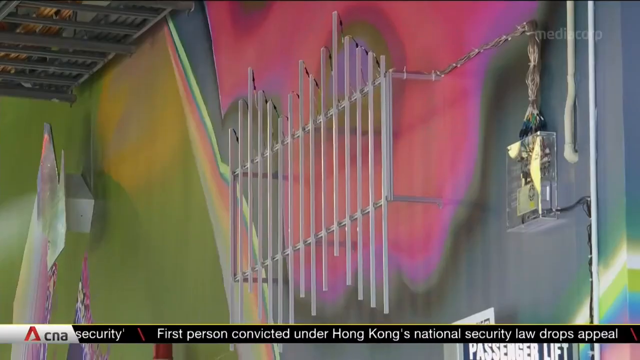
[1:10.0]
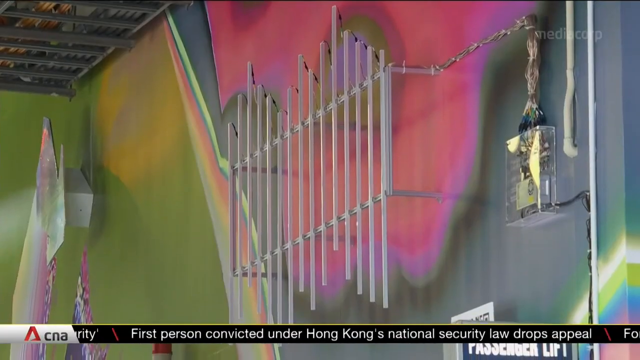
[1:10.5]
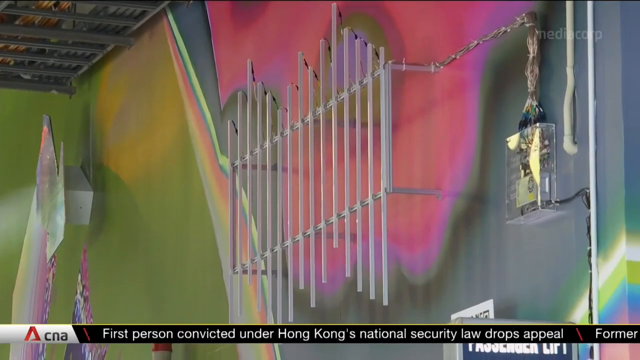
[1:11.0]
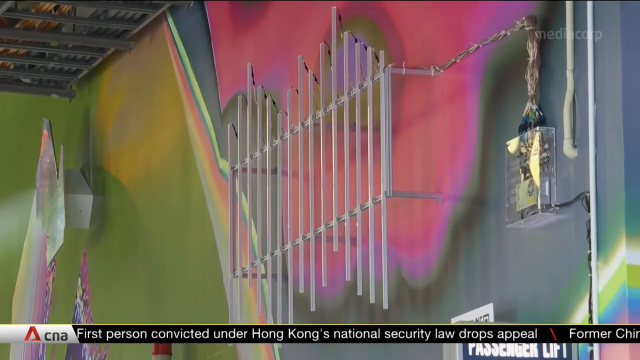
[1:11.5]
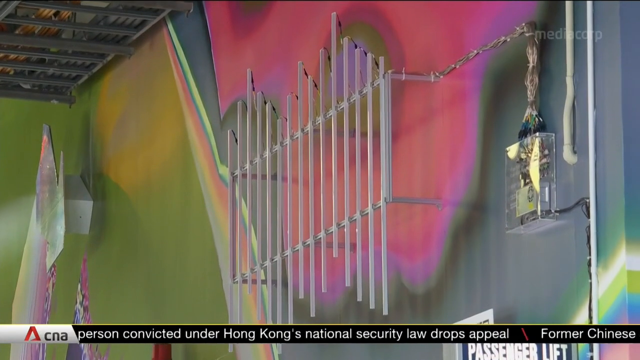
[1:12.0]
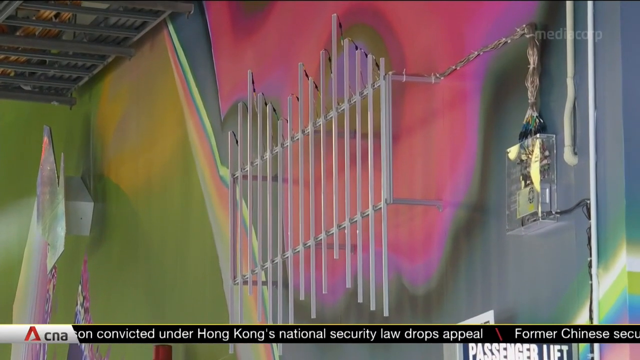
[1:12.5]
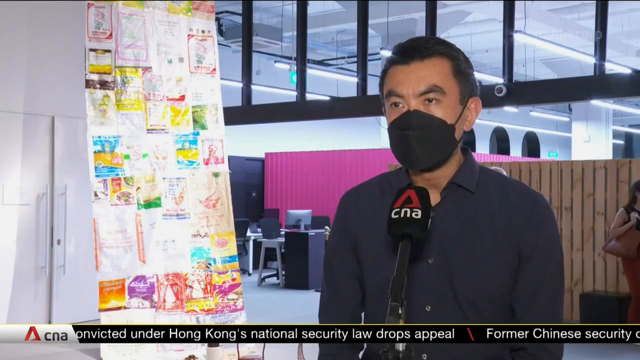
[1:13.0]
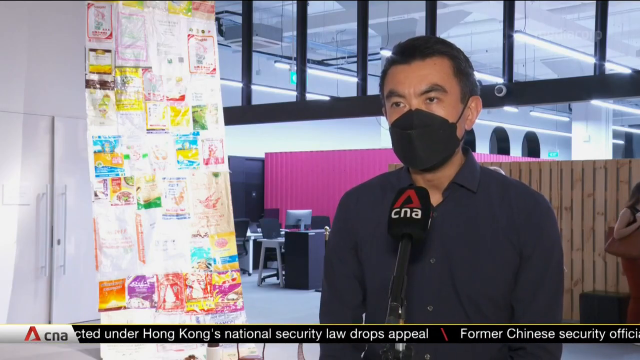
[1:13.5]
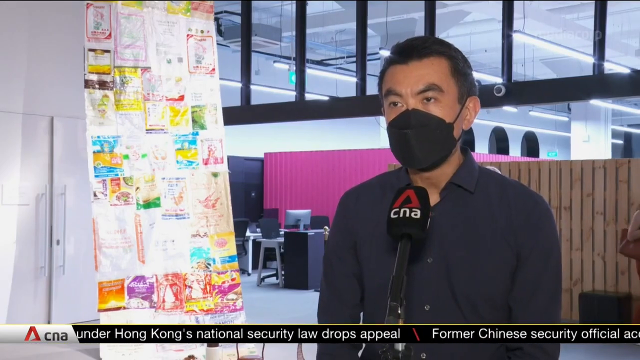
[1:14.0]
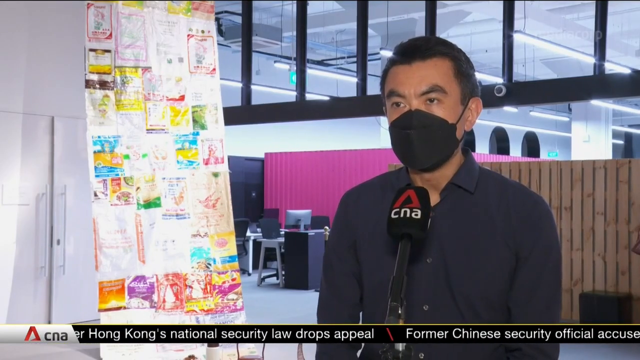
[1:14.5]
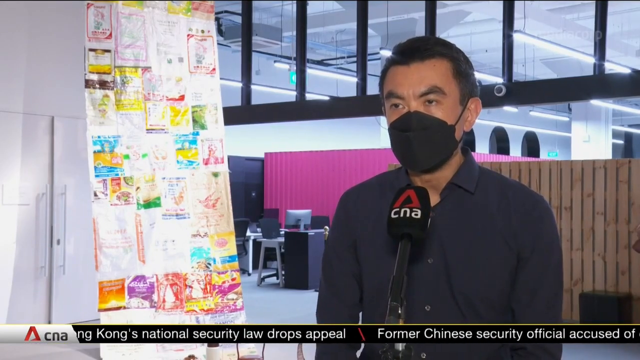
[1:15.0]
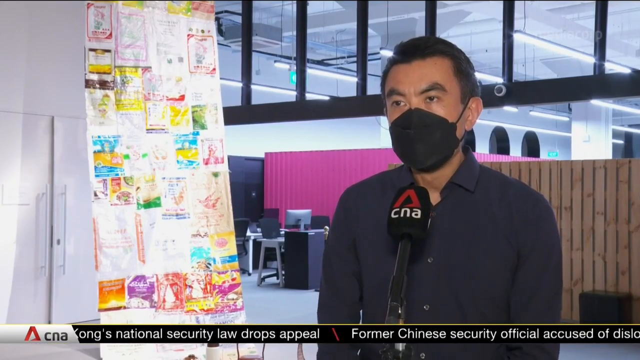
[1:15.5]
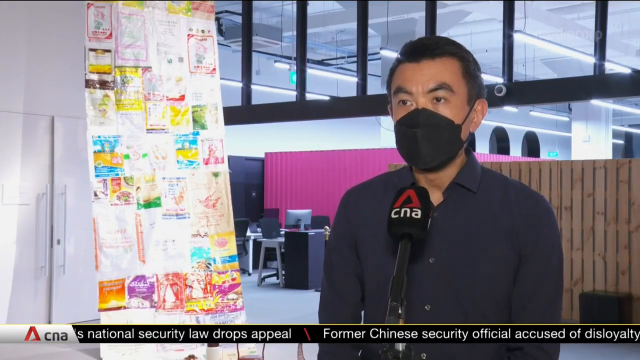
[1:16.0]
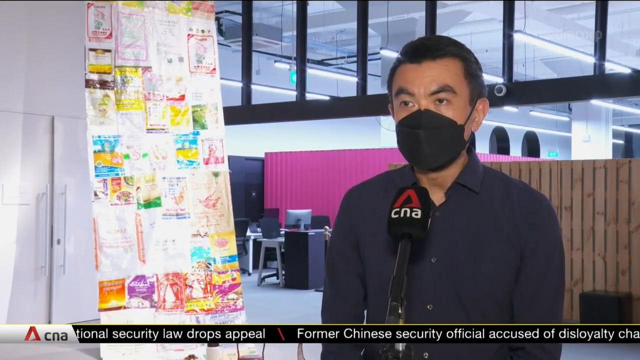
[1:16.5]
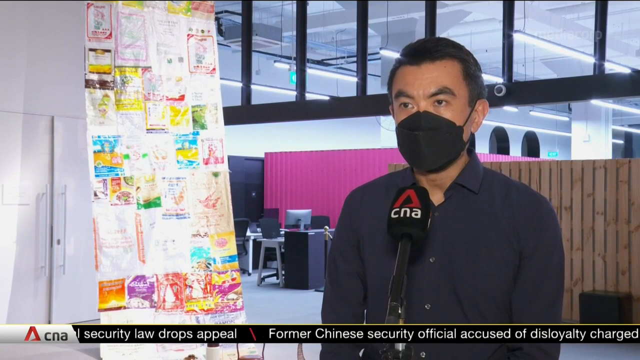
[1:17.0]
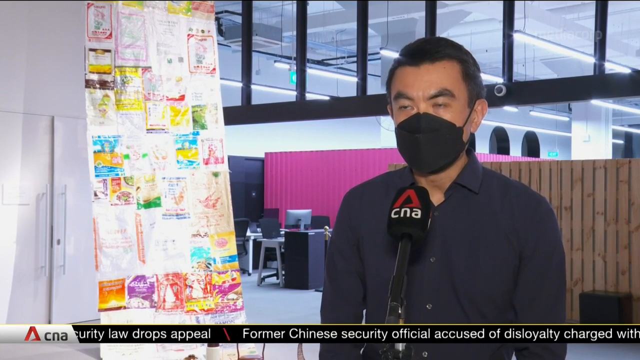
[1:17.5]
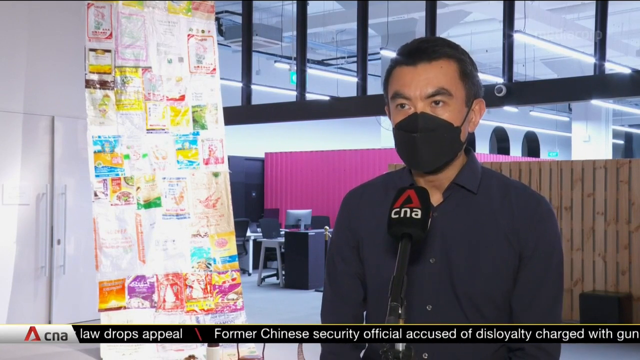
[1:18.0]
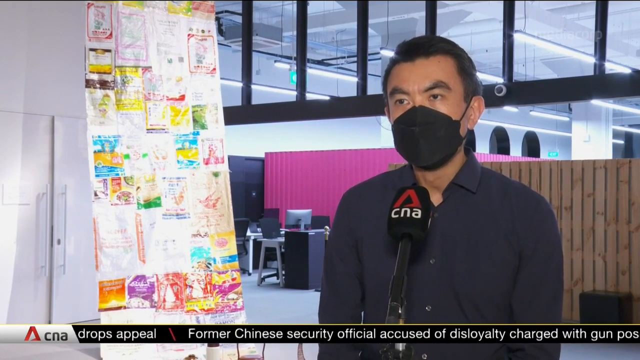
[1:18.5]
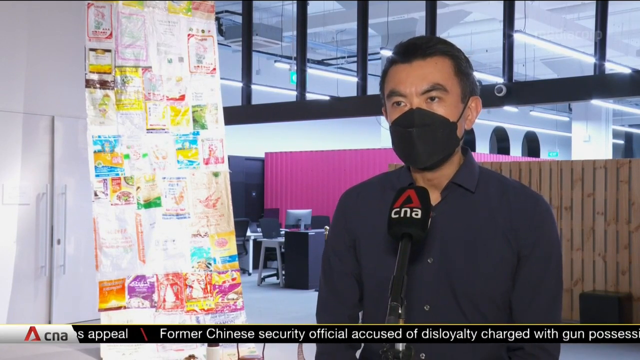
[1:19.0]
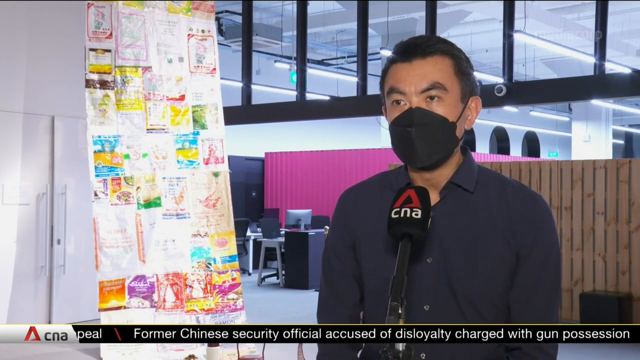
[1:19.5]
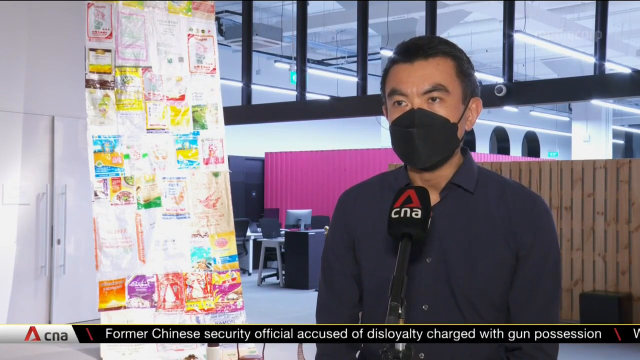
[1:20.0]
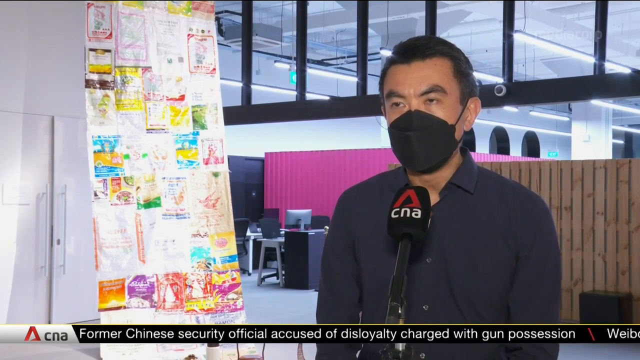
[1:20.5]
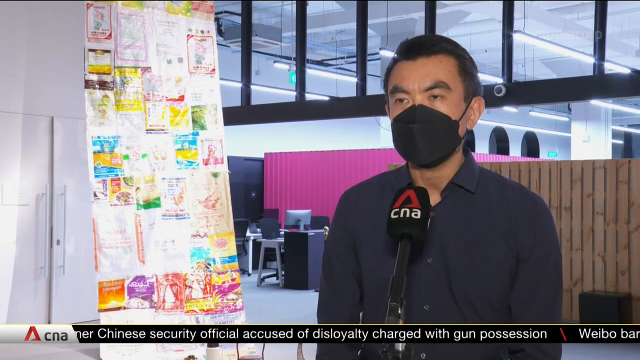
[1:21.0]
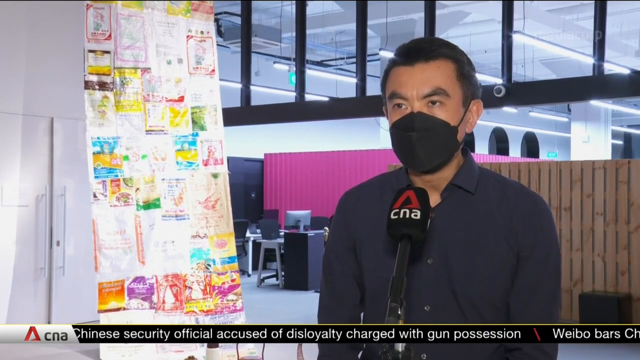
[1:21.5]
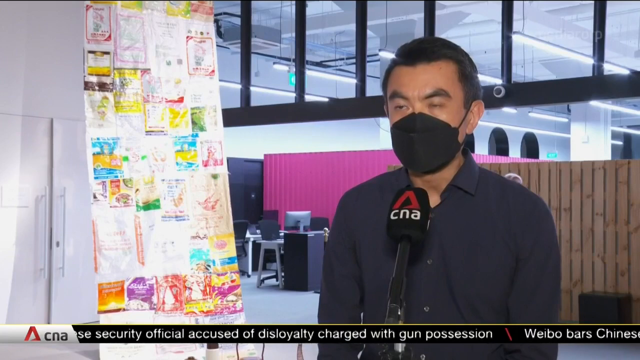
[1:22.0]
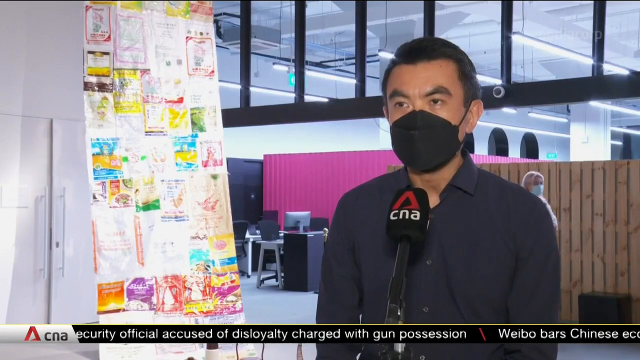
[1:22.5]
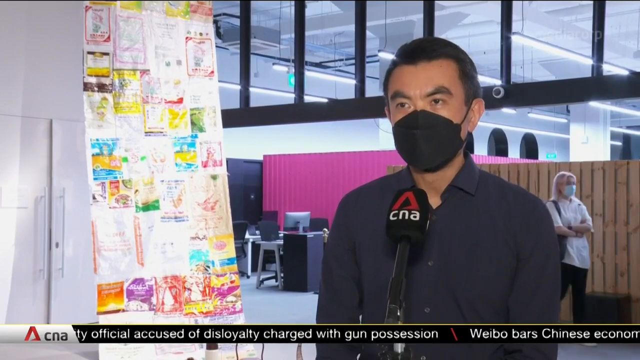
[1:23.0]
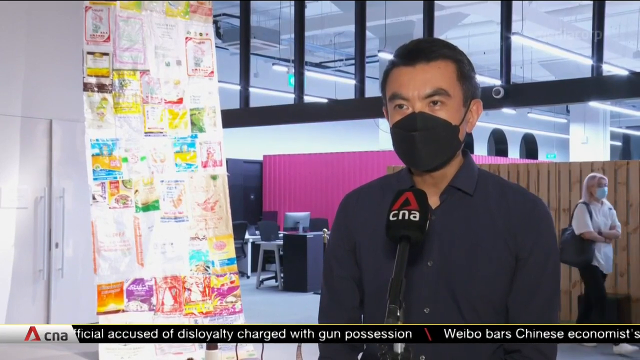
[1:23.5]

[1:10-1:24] Silver horizontal rectangular bars are attached to the wall, all connected to some type of device that looks electrical. The back wall is green, yellow and pink blended together. Then a man in his 40s with short black hair, wearing a black button-down shirt and a black mask, appears. To his right is another art piece dangling from the ceiling, and up on the ceiling behind him is something like a window design. He talks into a microphone bearing the letters "CNA". People wearing masks walk behind him.